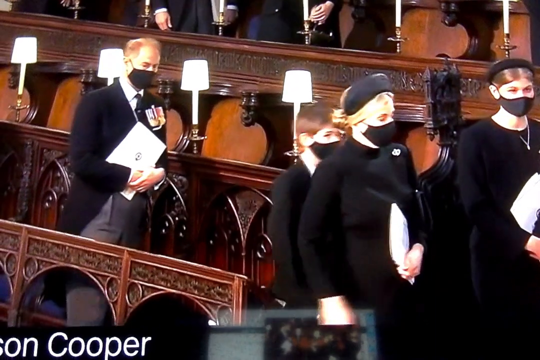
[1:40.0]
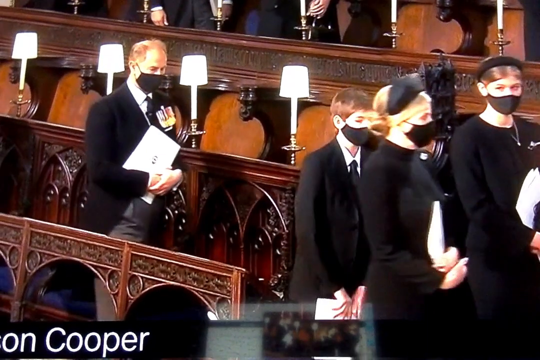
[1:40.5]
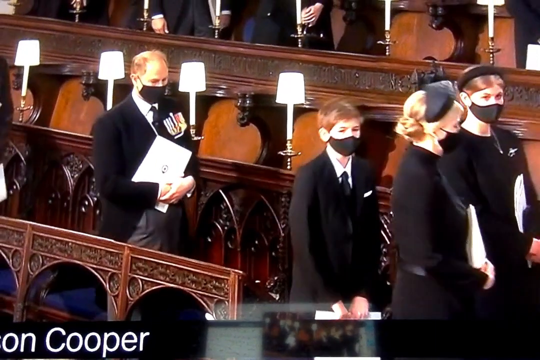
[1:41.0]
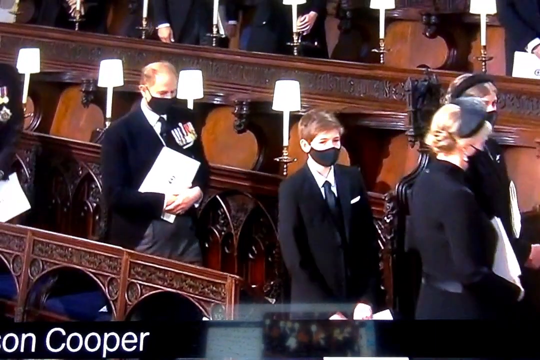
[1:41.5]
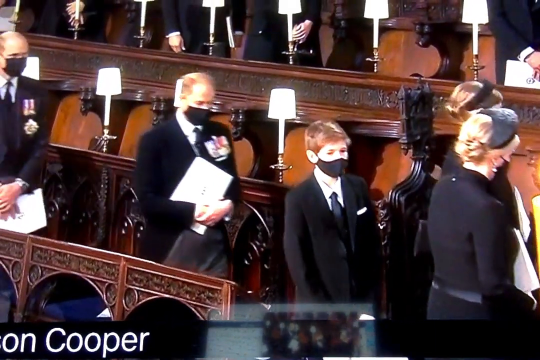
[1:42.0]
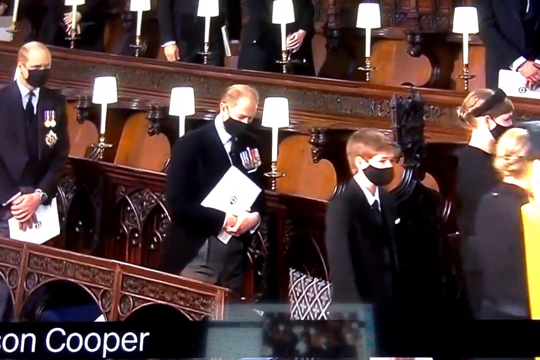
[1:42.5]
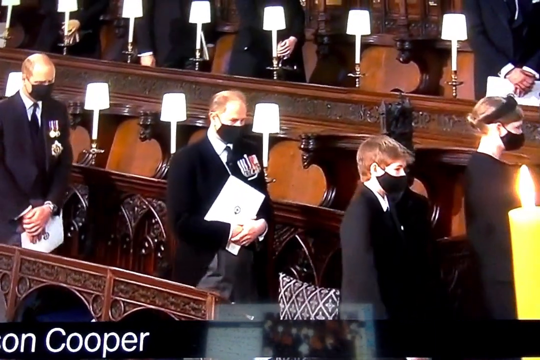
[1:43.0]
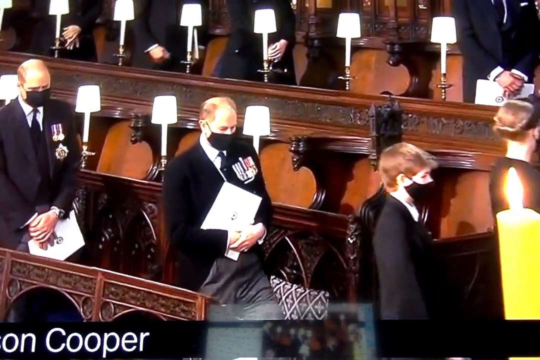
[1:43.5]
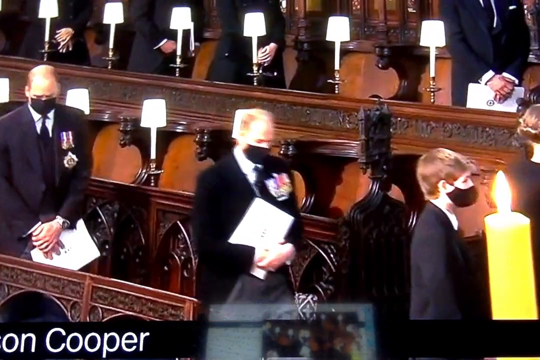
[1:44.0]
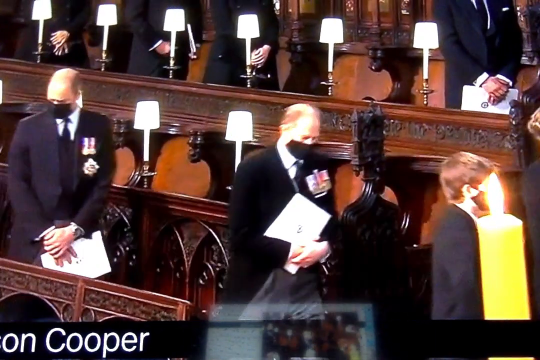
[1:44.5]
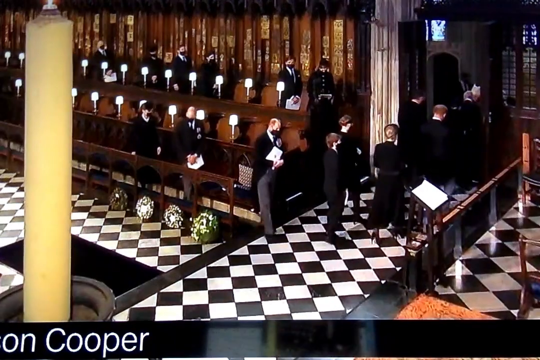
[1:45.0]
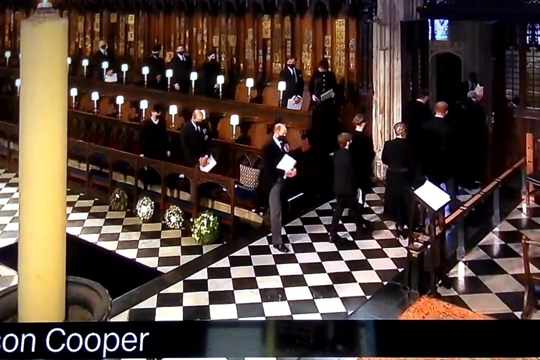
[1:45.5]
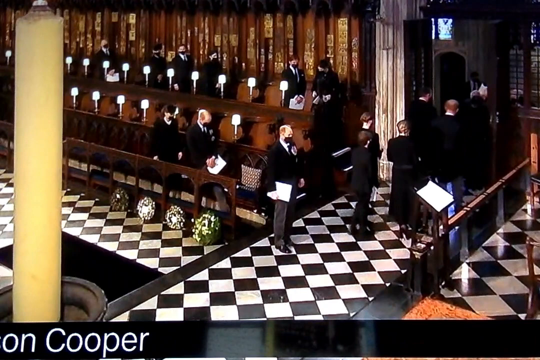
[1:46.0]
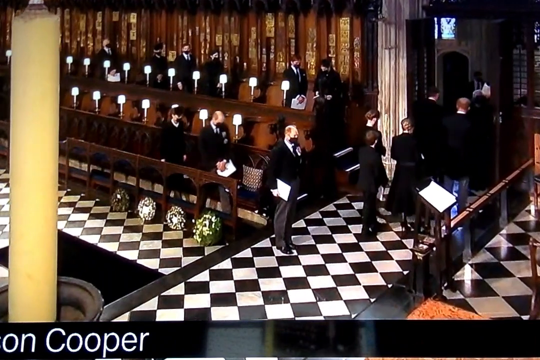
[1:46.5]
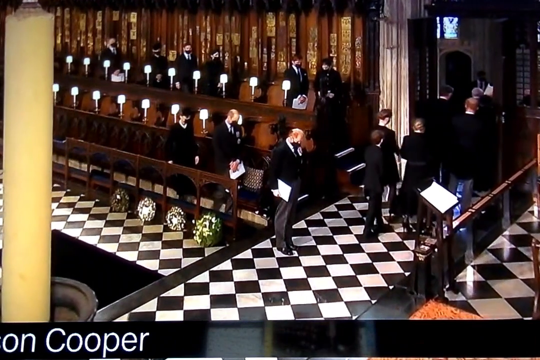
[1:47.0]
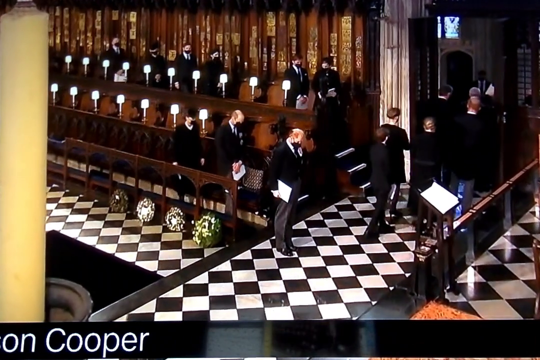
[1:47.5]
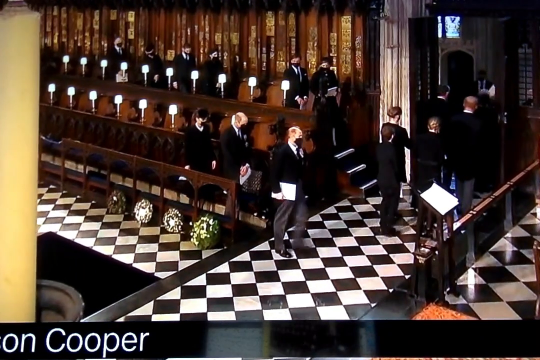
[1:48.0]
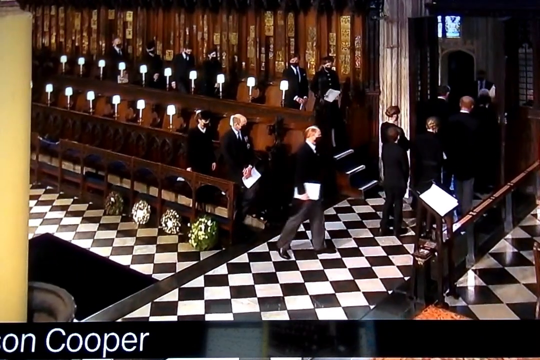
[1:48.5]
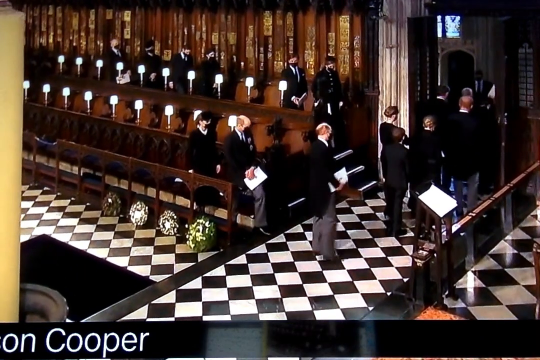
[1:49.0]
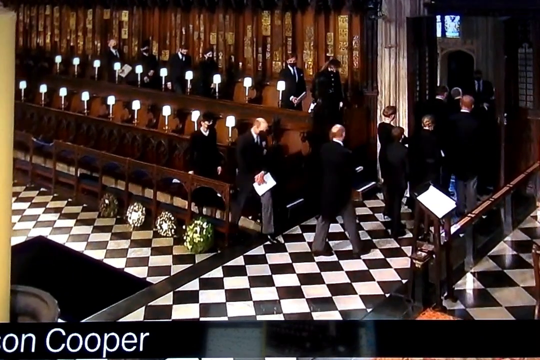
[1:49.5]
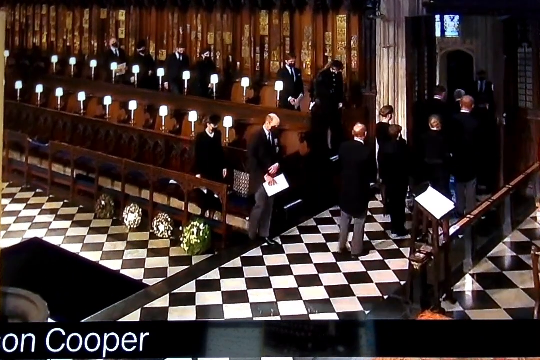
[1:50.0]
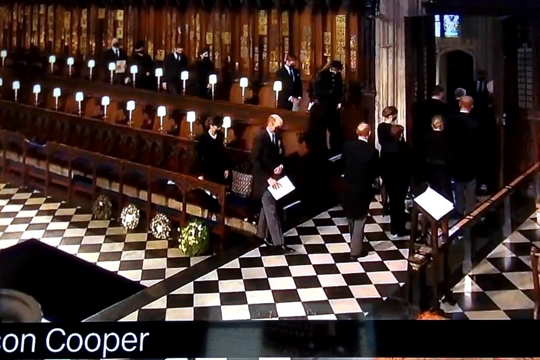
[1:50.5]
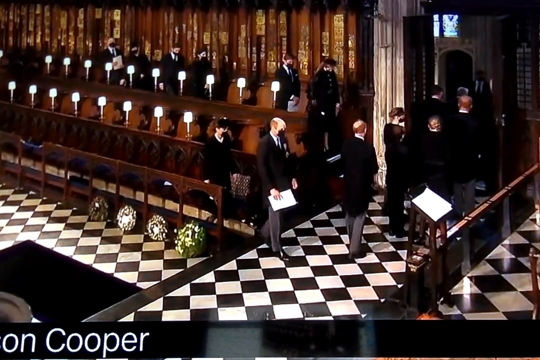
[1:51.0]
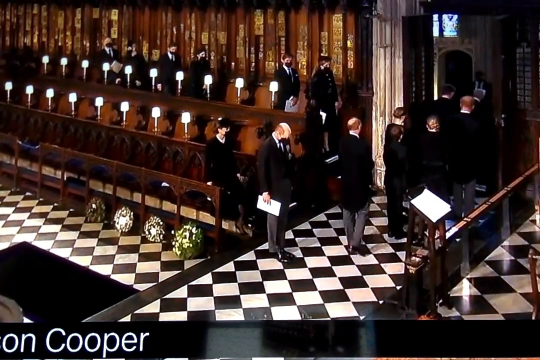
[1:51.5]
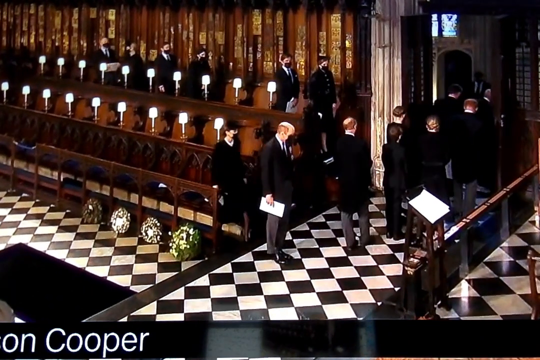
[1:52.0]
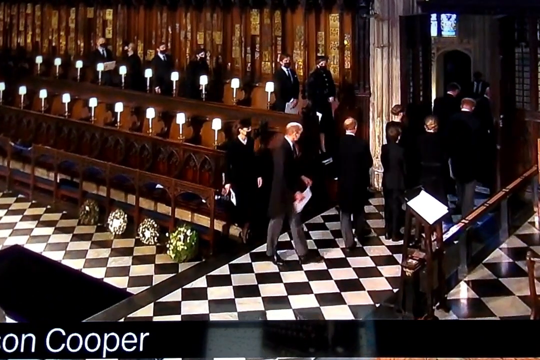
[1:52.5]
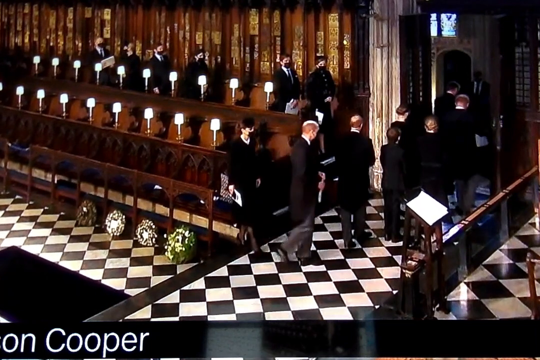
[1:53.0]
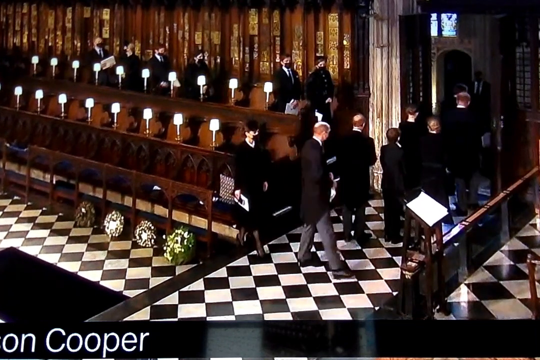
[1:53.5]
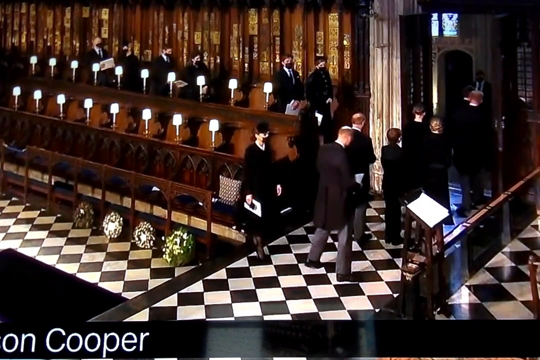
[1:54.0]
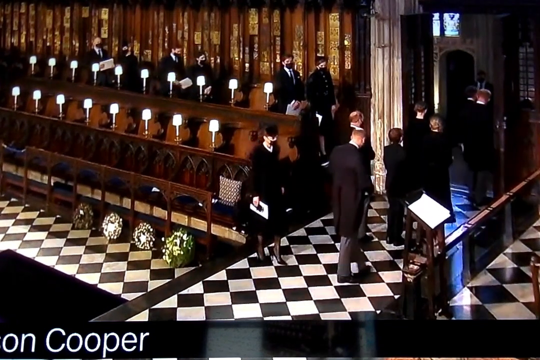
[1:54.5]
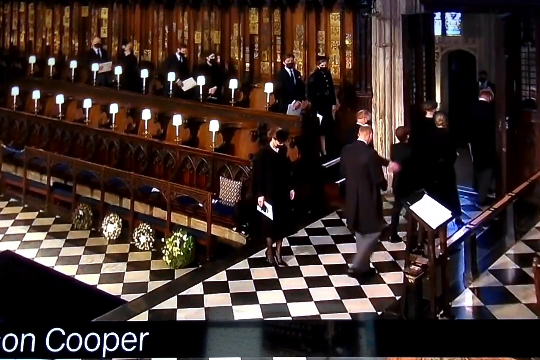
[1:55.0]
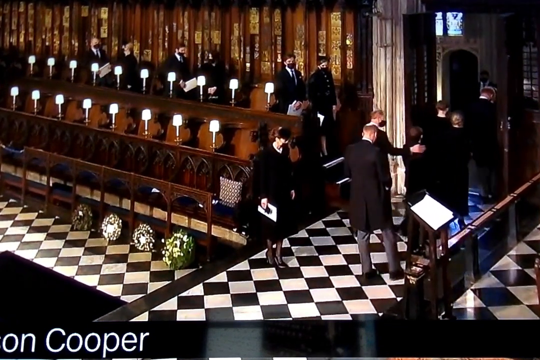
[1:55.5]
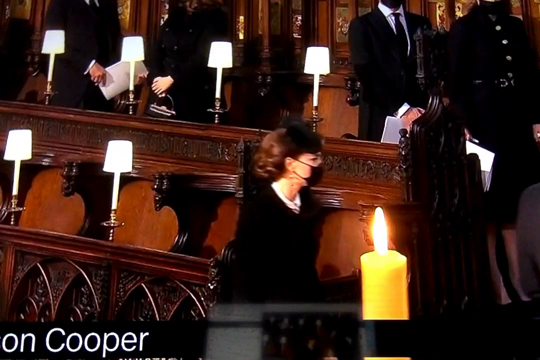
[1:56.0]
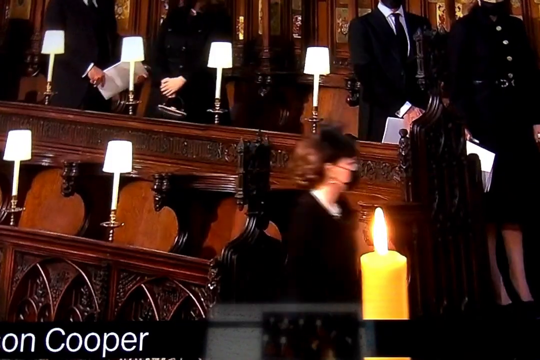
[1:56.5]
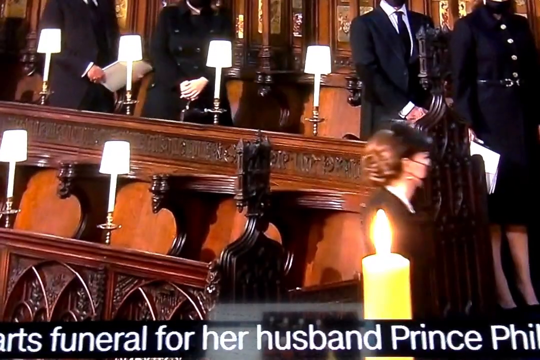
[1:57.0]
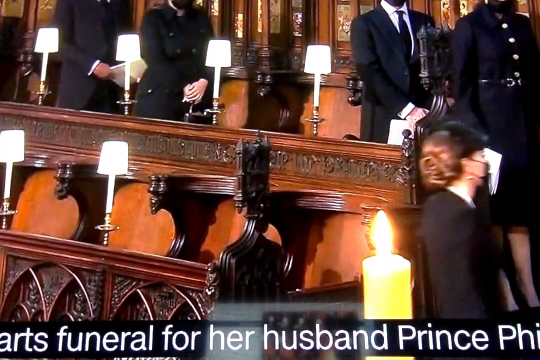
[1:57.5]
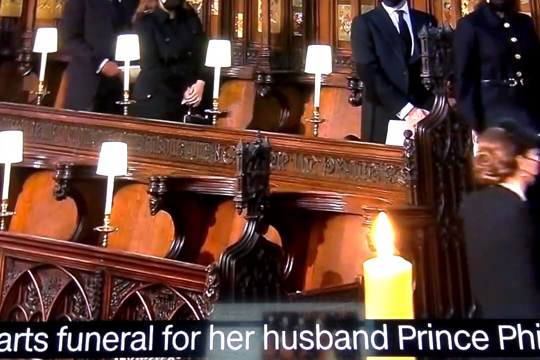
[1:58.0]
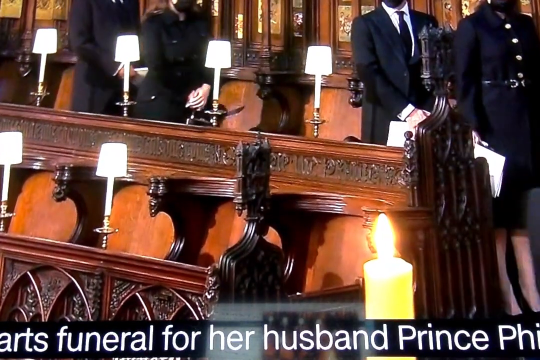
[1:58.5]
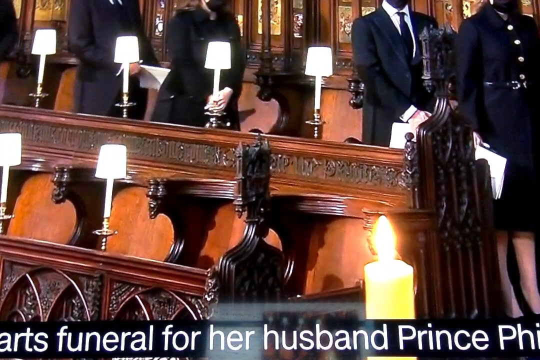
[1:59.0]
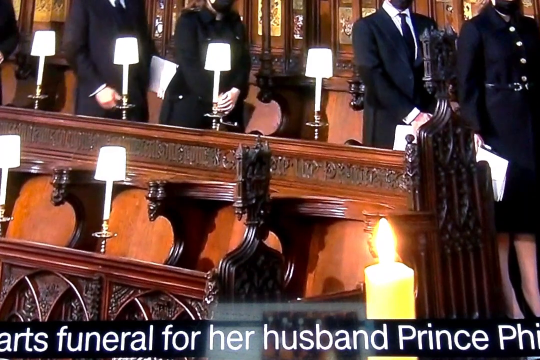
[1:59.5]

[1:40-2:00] People who were on the benches walk out; everything is made of wood. They are all dressed in black: the men in black suits and black ties, the women in black dresses, and all of them wear black masks. They all carry books with white pamphlets inside them as they walk towards the front of the stage. One man bows down, then turns to his right and keeps walking, and it seems they all bow first and then turn. More people are still near the benches, waiting their turn to walk towards the front. The floor is checkered black and white, and they are all exiting towards the left of the building.